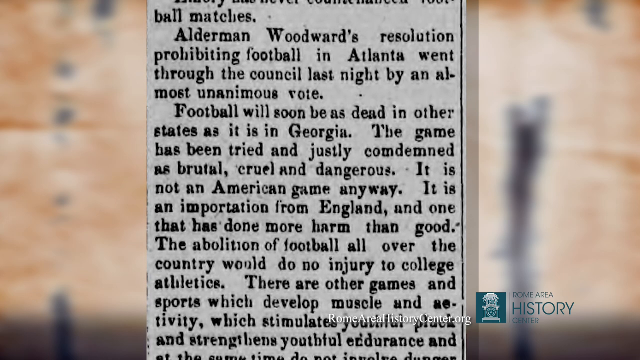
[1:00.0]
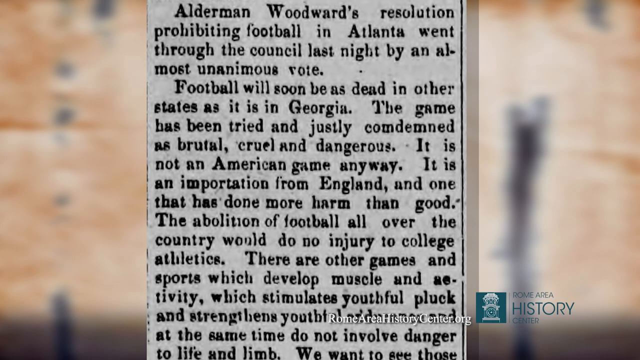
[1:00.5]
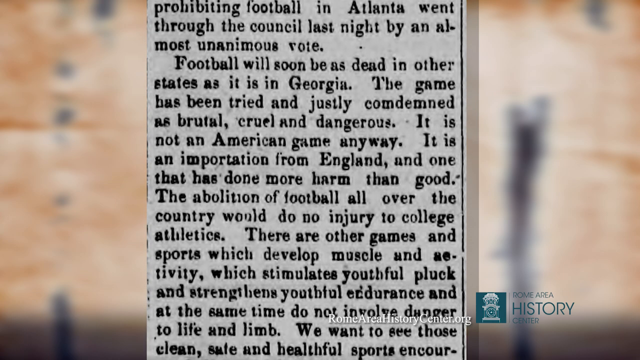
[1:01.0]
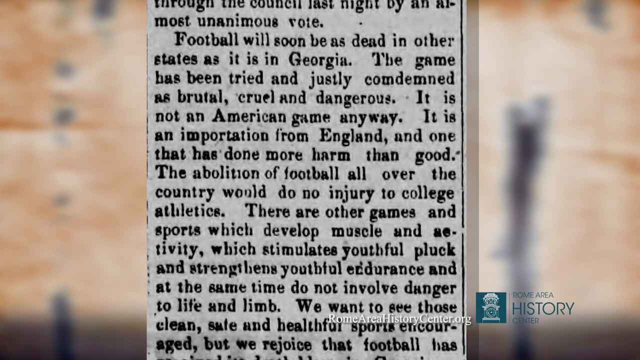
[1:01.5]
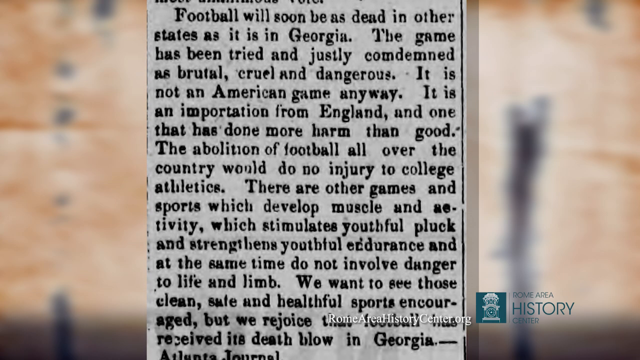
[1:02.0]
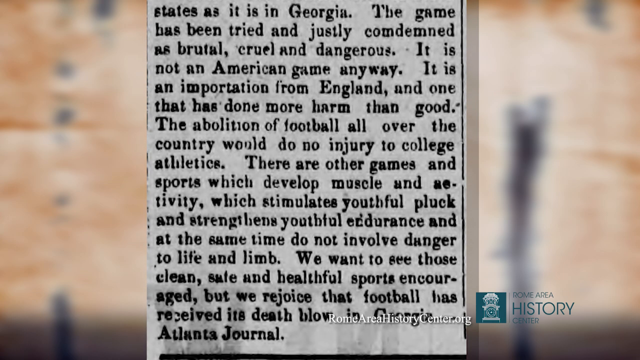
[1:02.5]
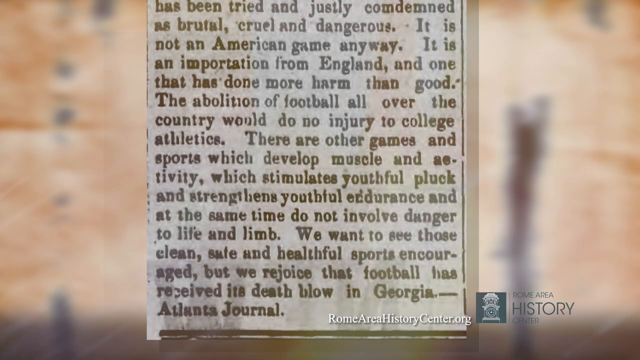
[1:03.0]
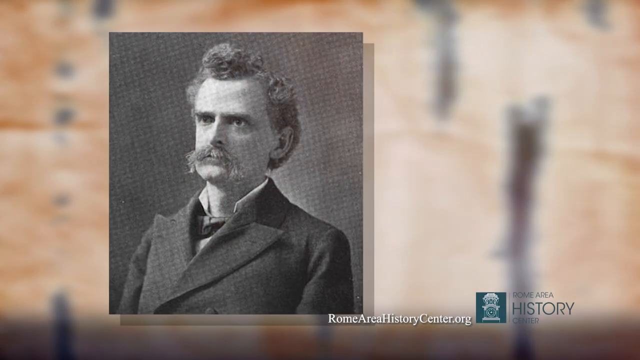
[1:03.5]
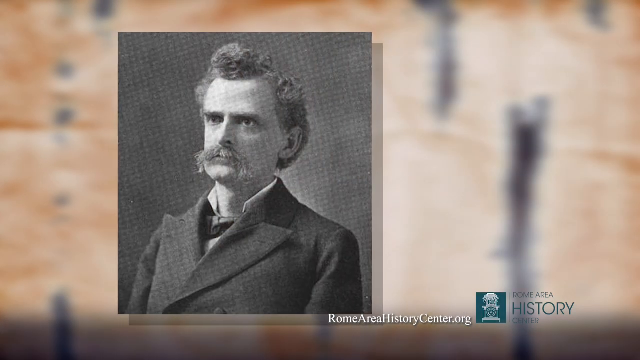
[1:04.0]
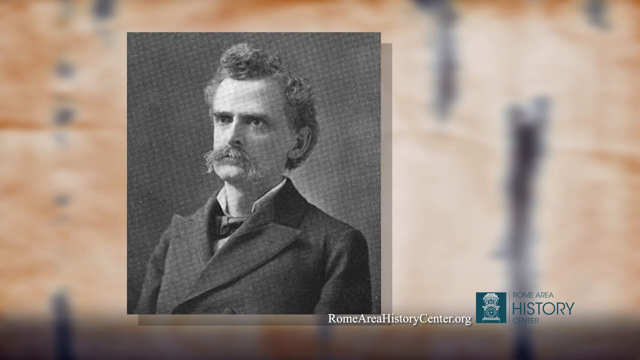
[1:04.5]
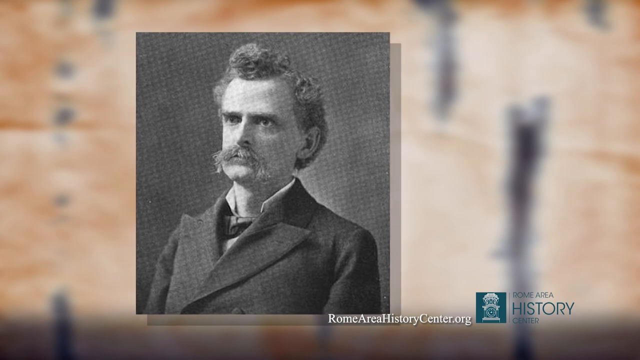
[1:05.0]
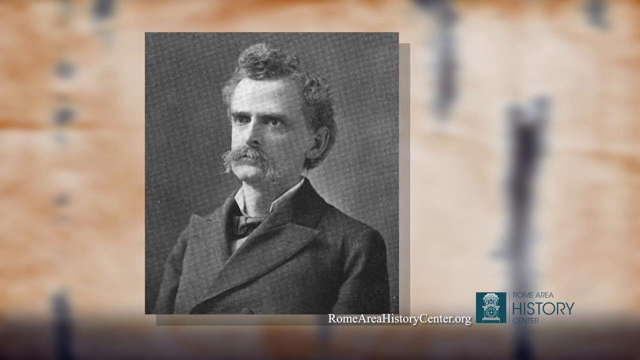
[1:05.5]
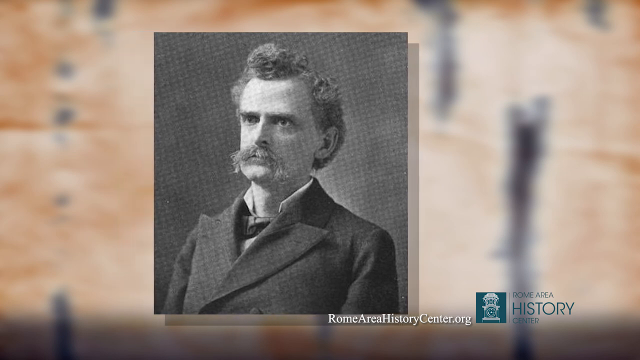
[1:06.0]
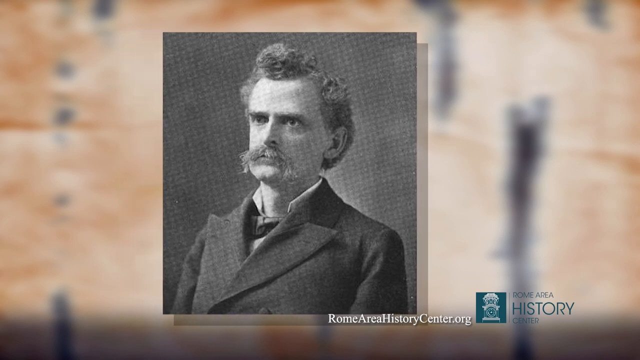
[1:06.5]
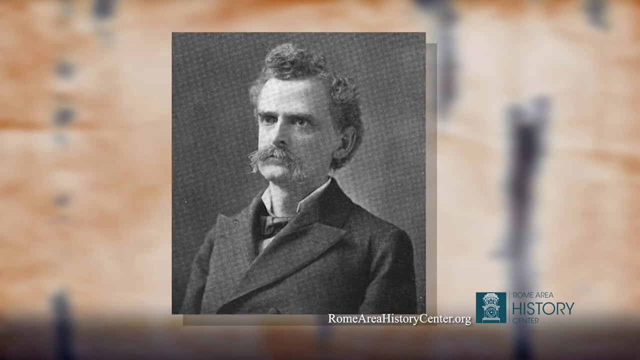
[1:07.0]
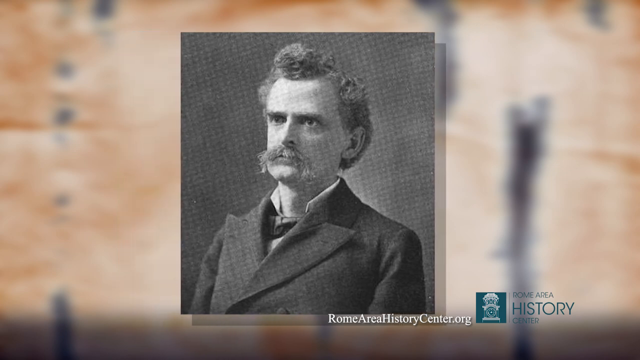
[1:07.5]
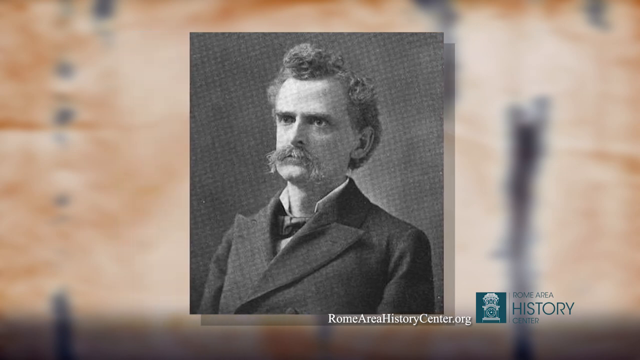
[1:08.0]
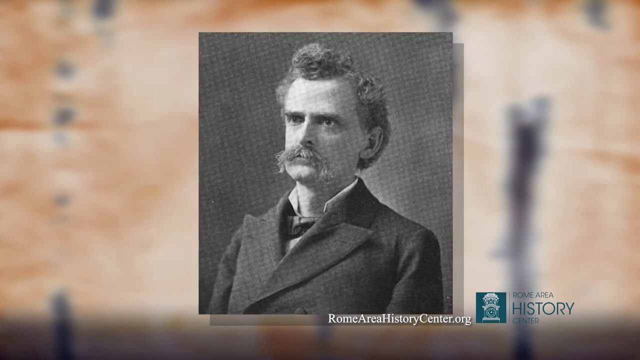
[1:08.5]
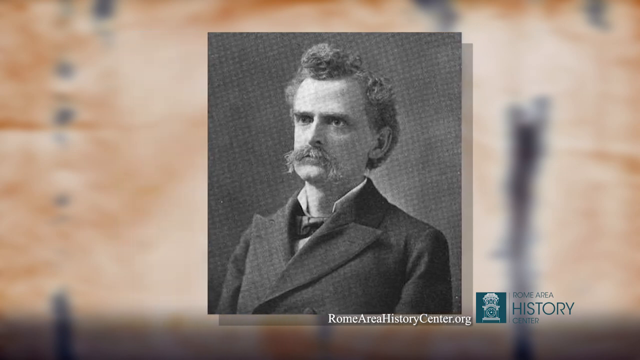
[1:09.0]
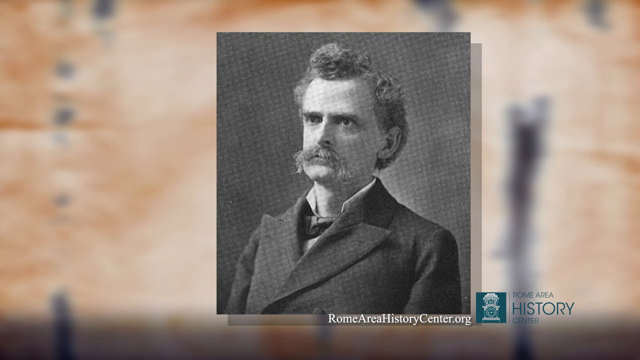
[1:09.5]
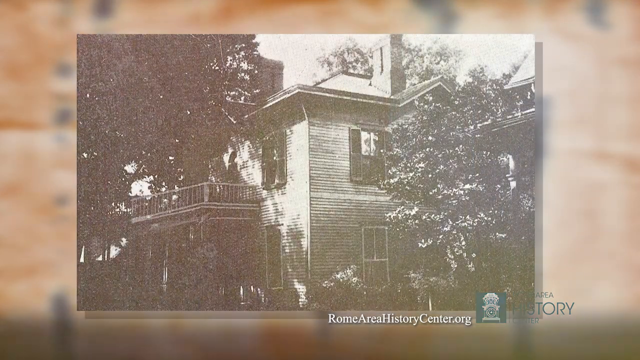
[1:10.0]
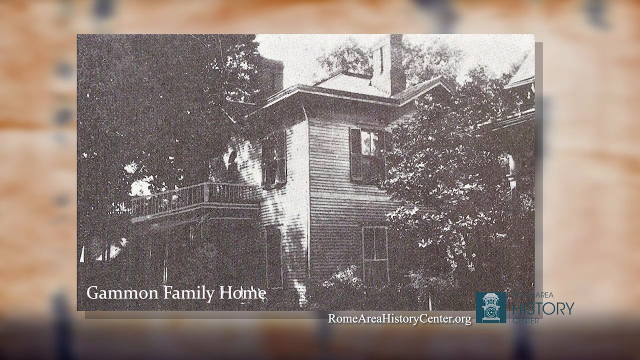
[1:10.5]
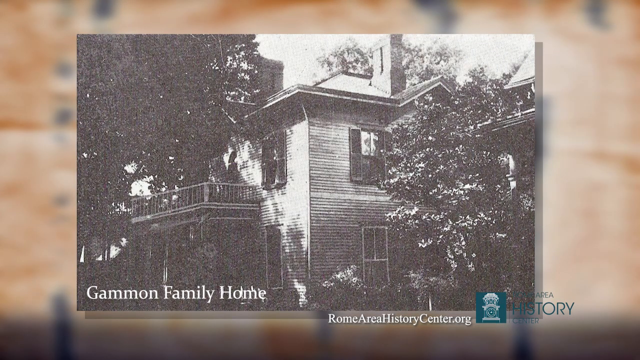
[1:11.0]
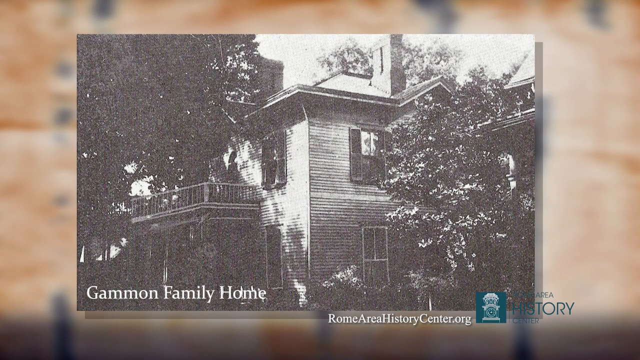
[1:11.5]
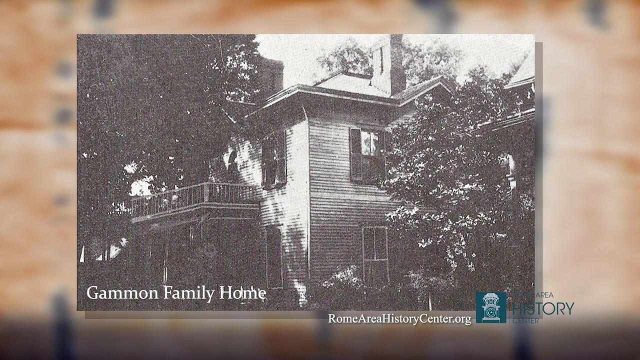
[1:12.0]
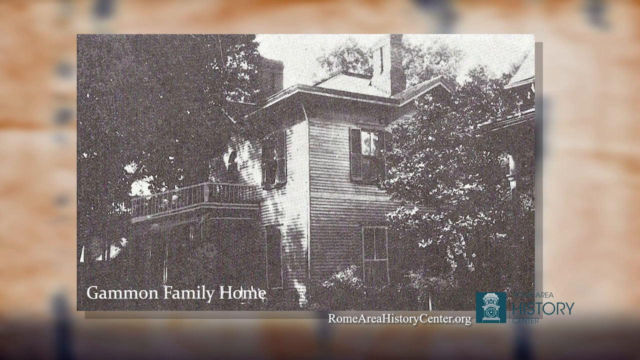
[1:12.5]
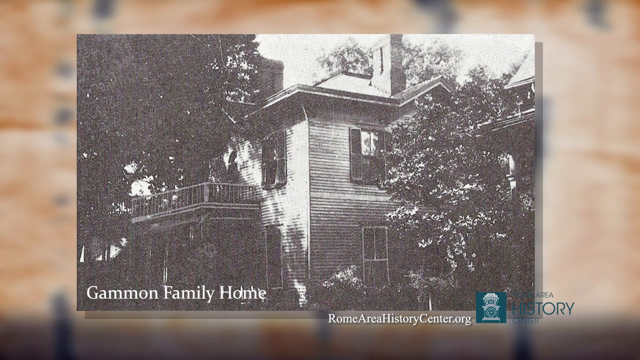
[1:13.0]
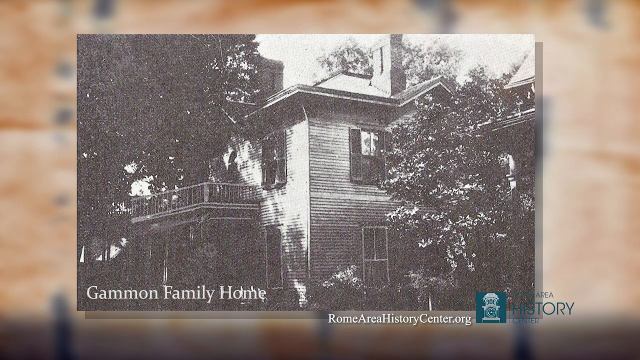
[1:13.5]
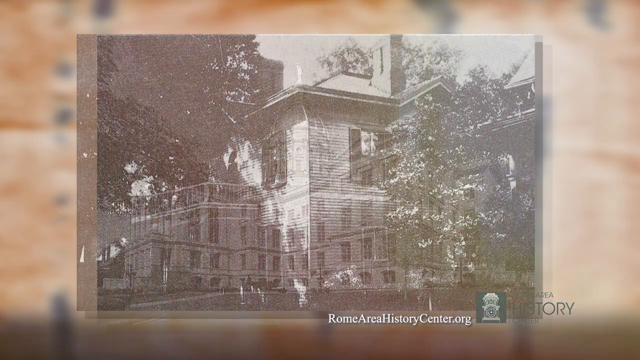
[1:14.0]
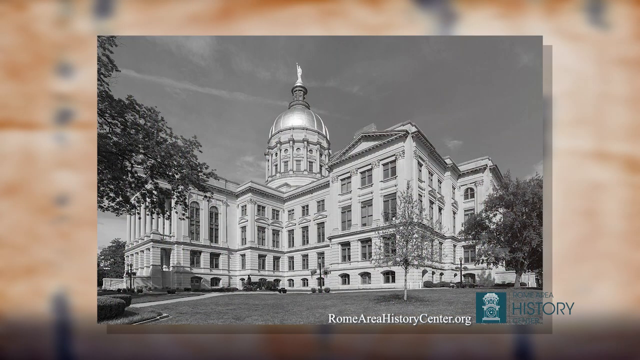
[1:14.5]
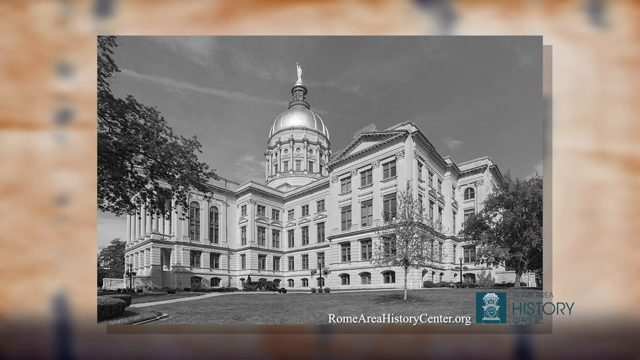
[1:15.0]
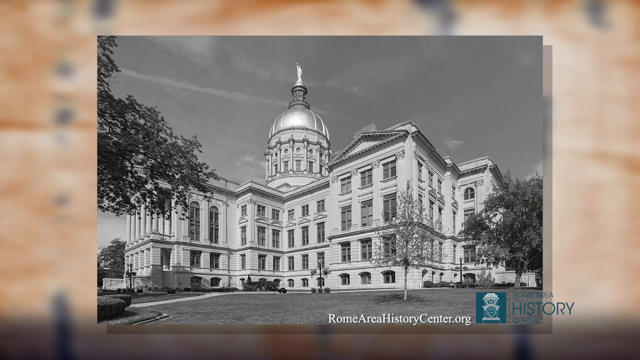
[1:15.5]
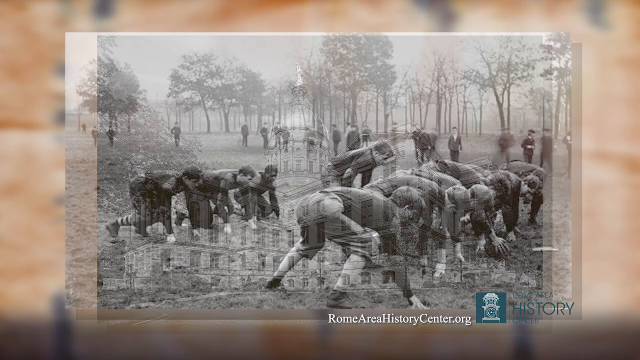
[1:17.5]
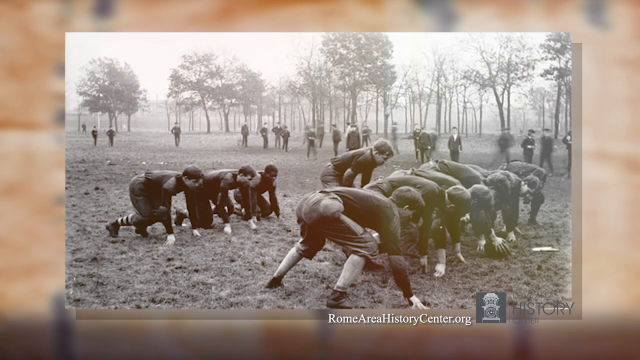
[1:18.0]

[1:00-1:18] The newspaper clipping scrolls down, continuing with the text "Football will soon be as dead in other states as it is in Georgia. The game has been tried and justly condemned as brutal, cruel, and dangerous. It is not an American game anyway. It is an importation from England and one that has done more harm than good. The abolition of football all over the country would do no injury to college athletics. There are other games and sports which develop muscle and activity which stimulates youthful pluck and strengthens youthful endurance and at the same time do not involve danger to life and limb. We want to see those clean, safe and healthful sports encouraged, but we rejoice that football has received its death blow in Georgia. Atlanta journal." Next is an old black-and-white image of a man in a suit with a big collar; he has a bushy mustache and short hair and looks to be Caucasian. Then a very close-up, poor-resolution black-and-white image of a house shows some windows in the roof and some trees, with white text in the bottom left reading "gammon family home." Another black-and-white picture shows a building that looks to be a state capitol, with many windows, columns on its left side, a very clean lawn in front, a sidewalk leading up to it, and a big dome roof with a statue at the top. In the last second, a very old black-and-white image shows some boys or men lined up to play football.